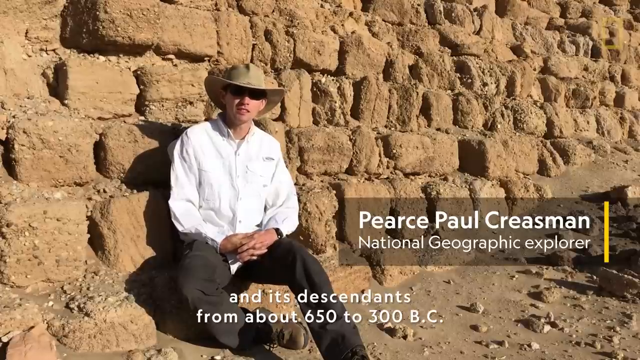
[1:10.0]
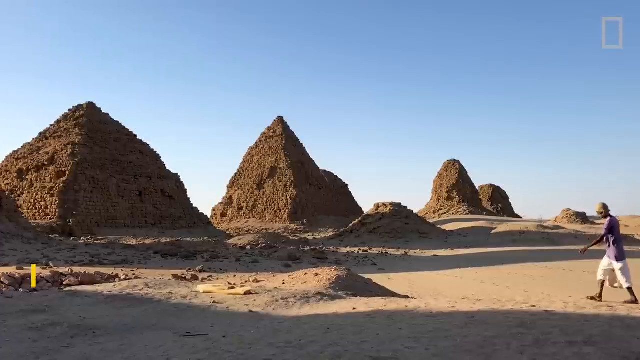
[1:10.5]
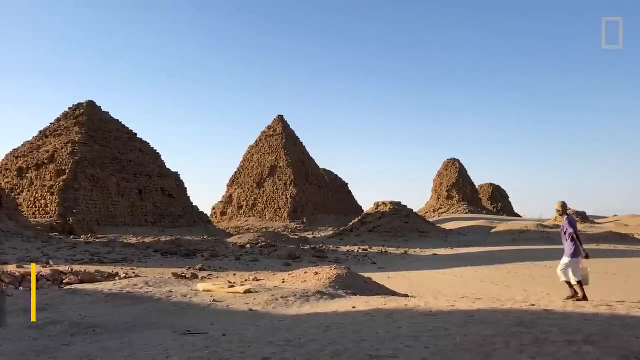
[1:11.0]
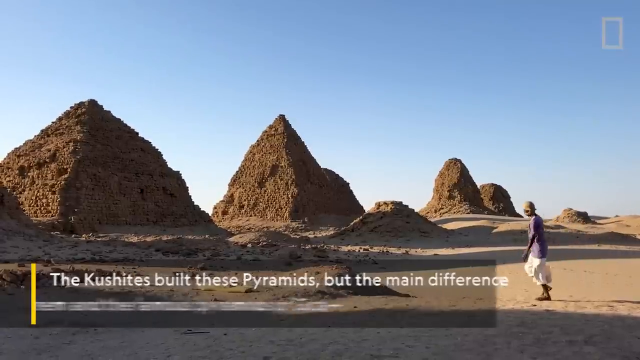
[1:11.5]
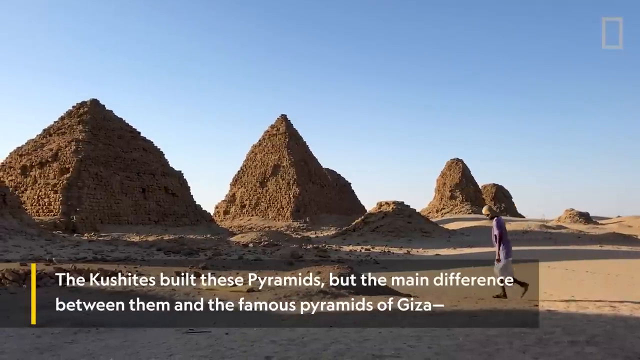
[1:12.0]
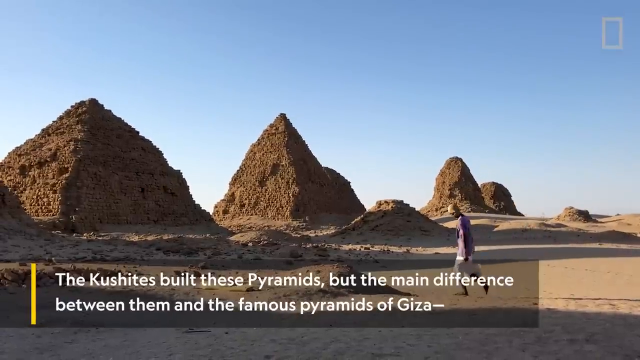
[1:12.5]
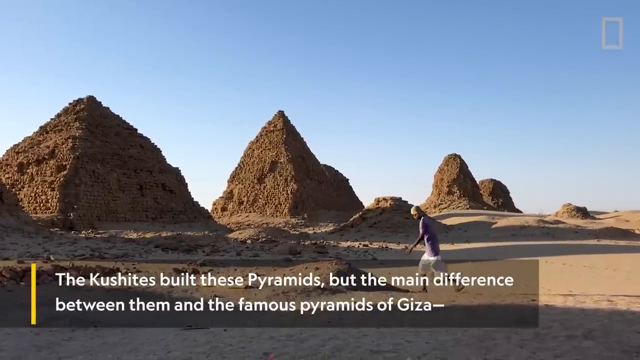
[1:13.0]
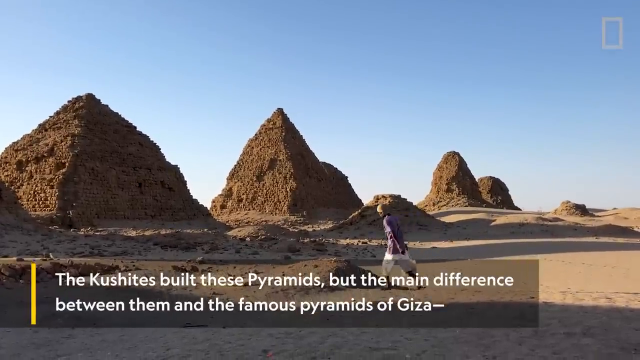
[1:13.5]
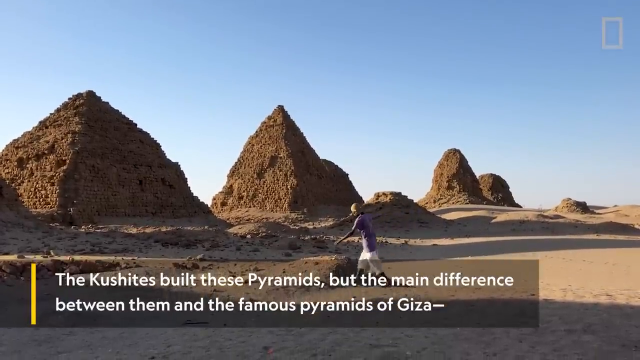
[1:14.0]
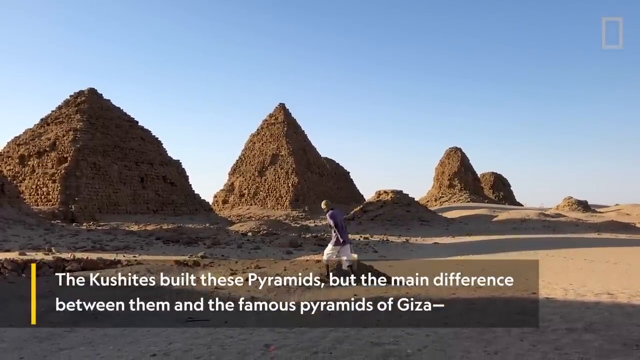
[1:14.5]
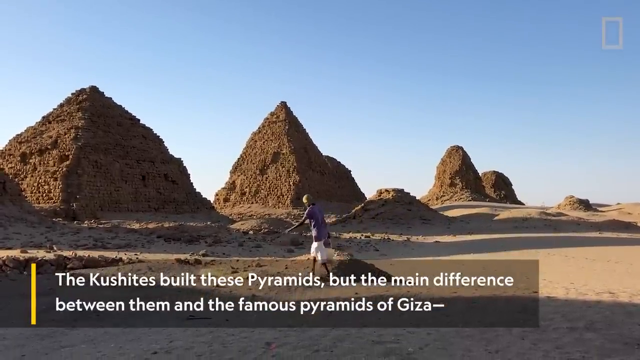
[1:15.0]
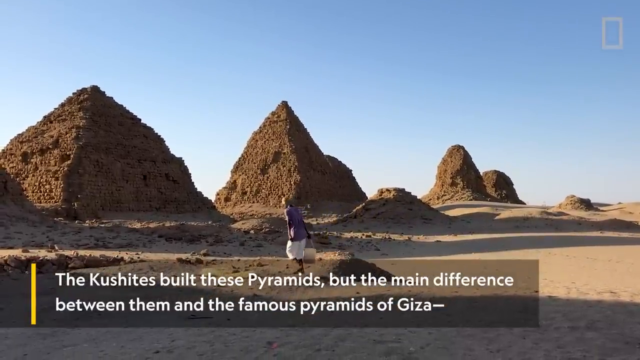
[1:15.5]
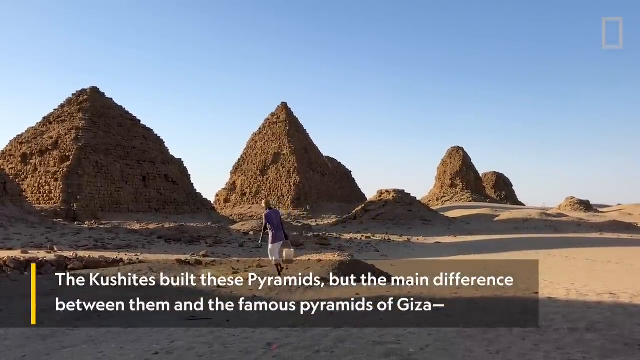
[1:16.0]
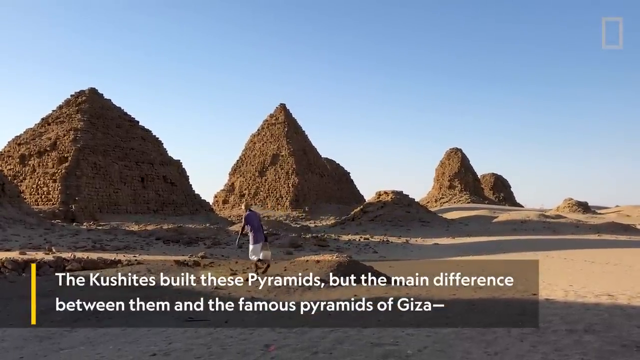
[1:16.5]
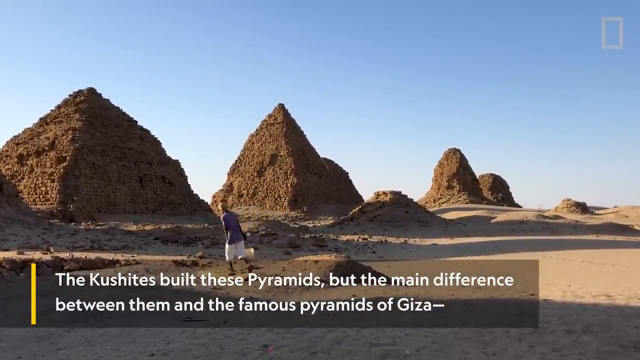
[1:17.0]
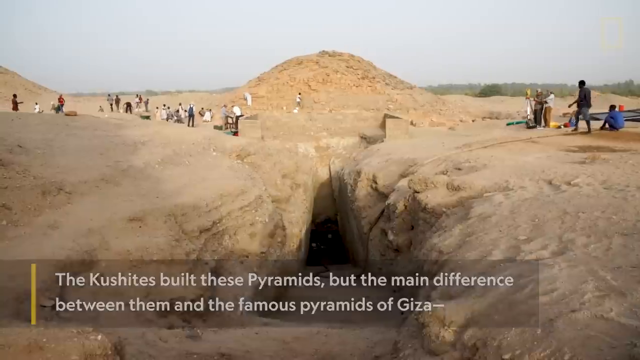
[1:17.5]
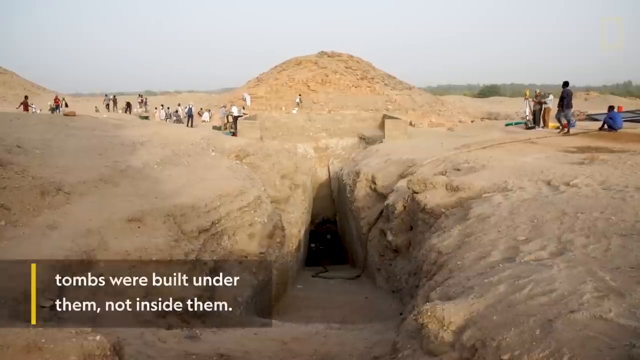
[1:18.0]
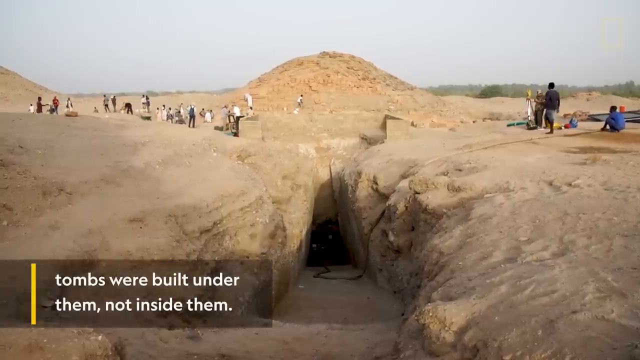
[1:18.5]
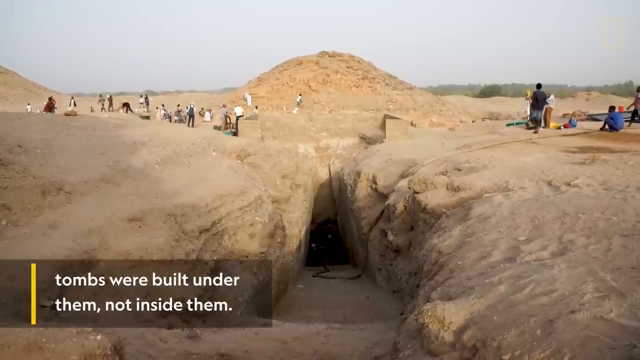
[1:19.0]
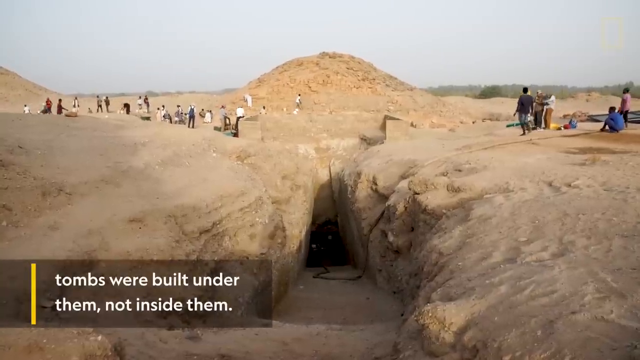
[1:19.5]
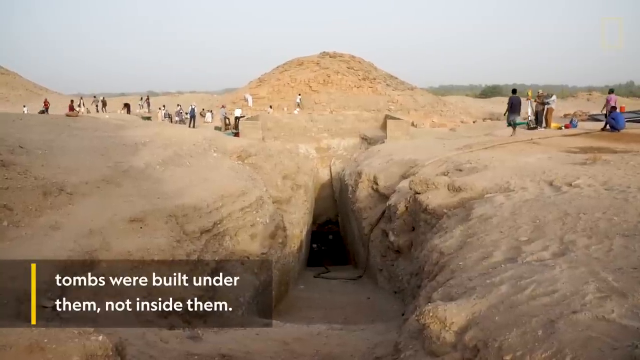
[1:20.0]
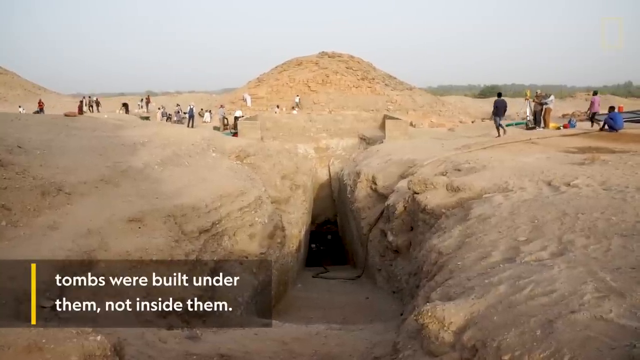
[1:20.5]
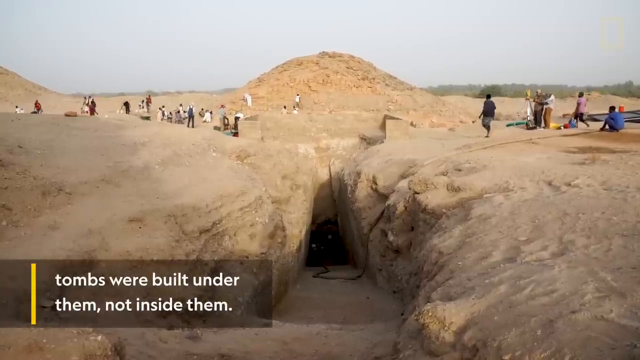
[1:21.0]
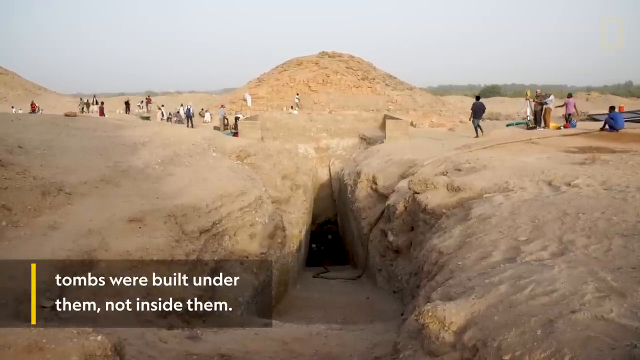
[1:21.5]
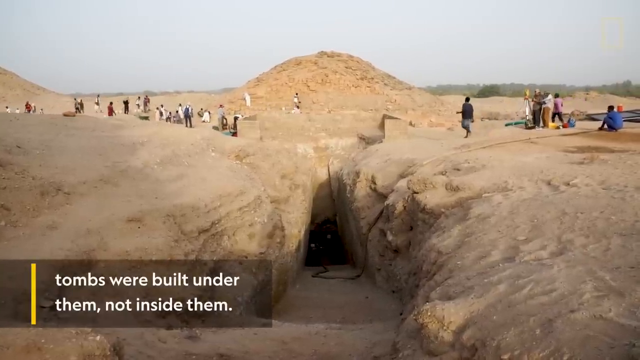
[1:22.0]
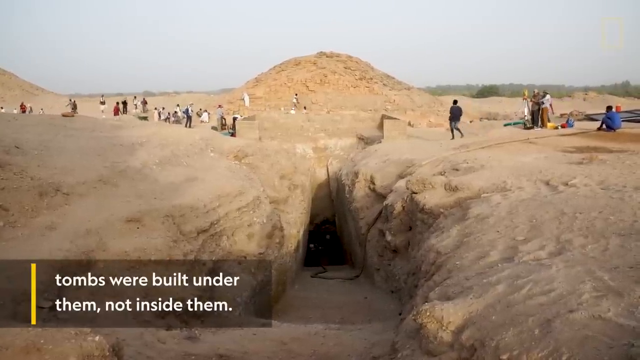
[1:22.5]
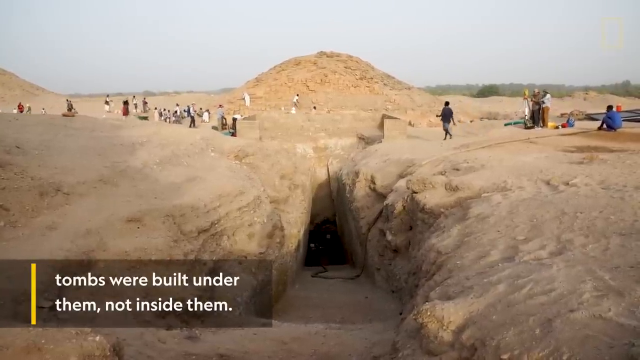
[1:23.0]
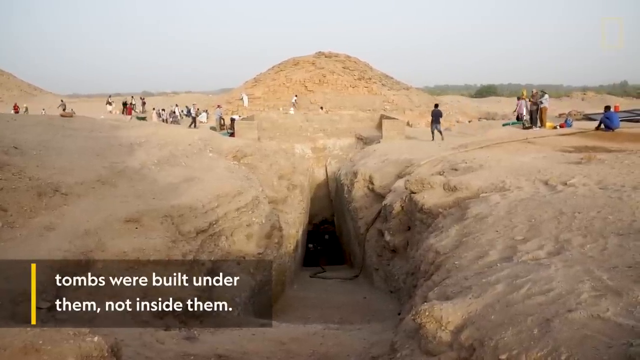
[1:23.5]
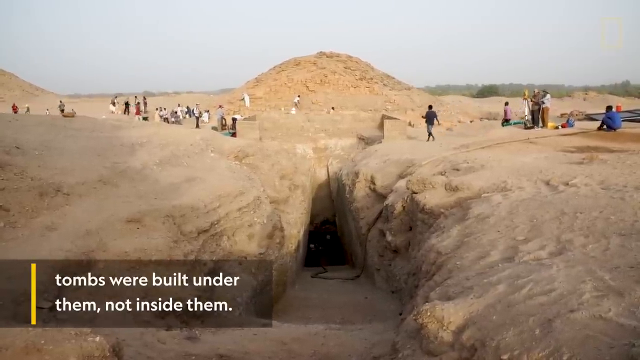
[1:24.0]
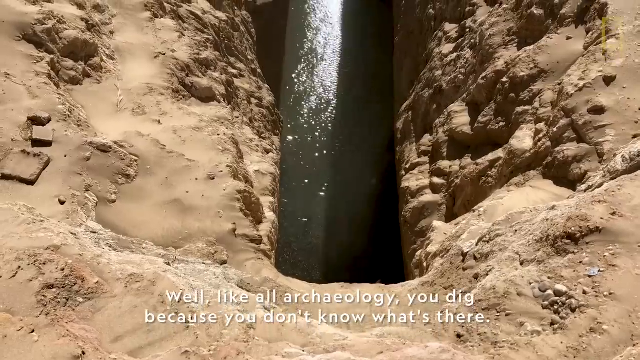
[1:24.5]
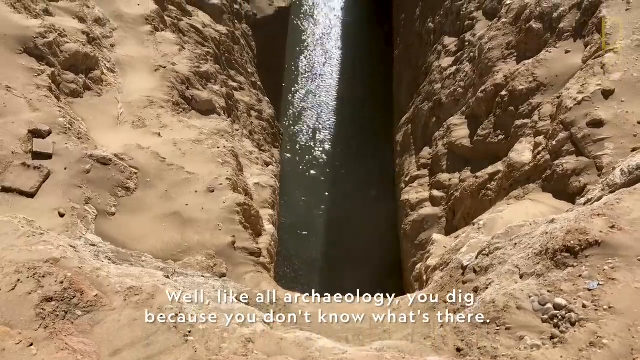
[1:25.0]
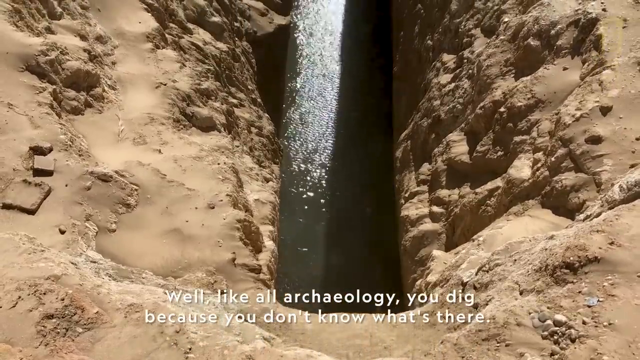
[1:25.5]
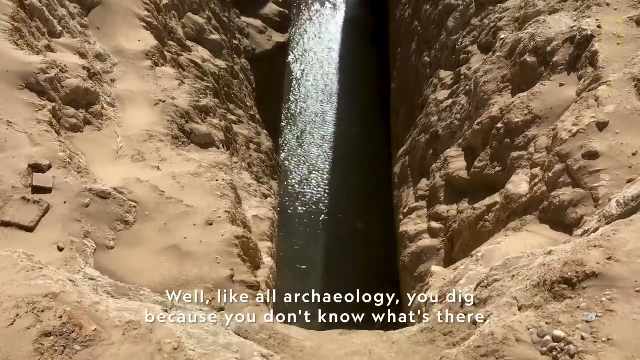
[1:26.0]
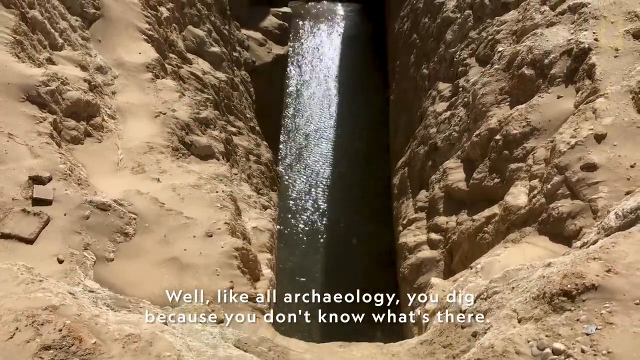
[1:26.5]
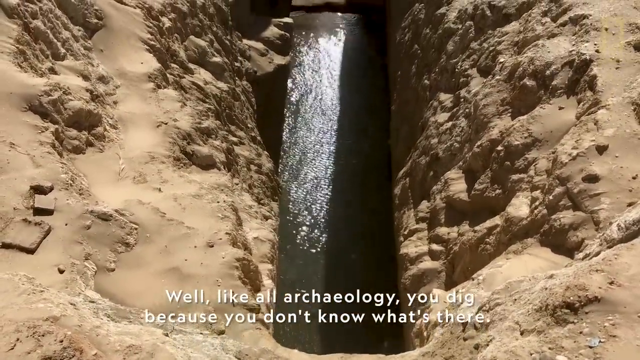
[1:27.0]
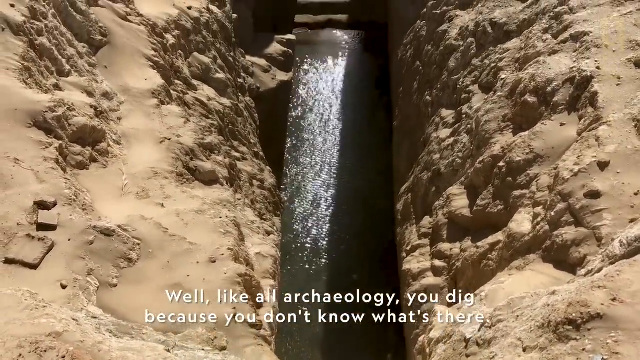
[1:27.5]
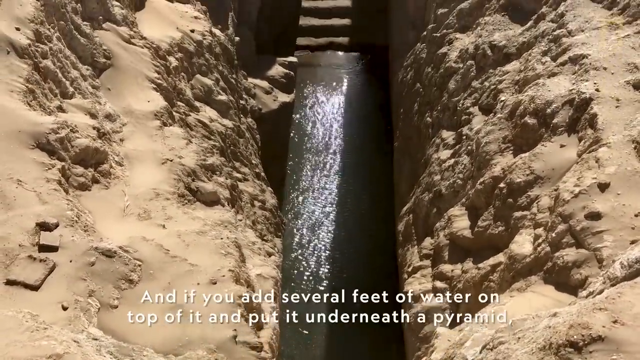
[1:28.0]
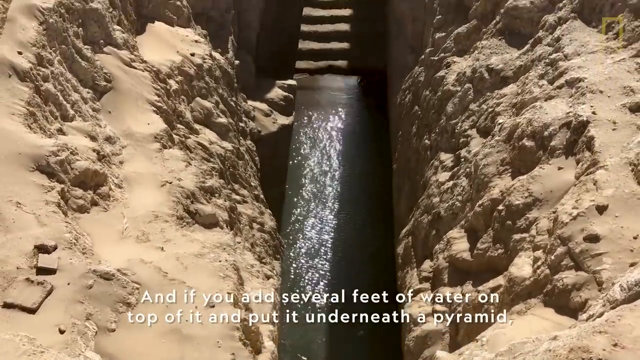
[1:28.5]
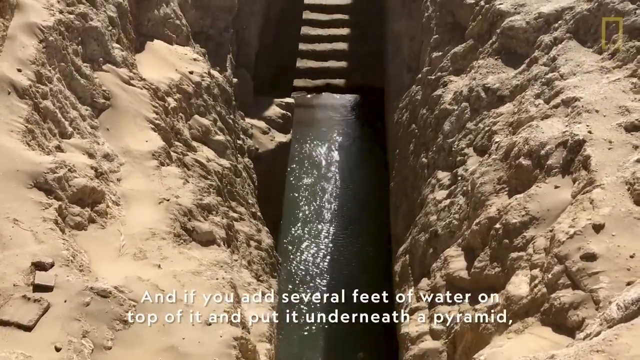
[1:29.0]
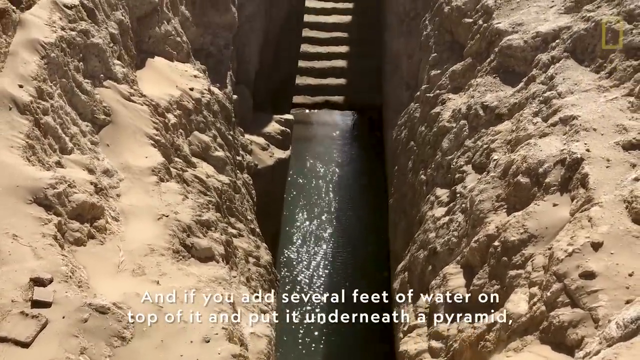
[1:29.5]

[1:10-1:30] The pyramids were built by the Cushites, whose tombs are built under the pyramids rather than inside them. Explorer Pierce is about to dig several feet down under the pyramids to open up the tombs.